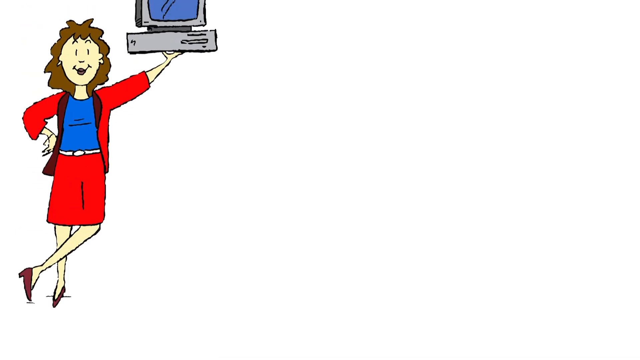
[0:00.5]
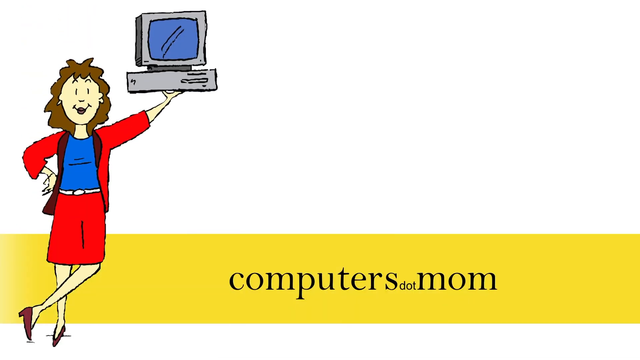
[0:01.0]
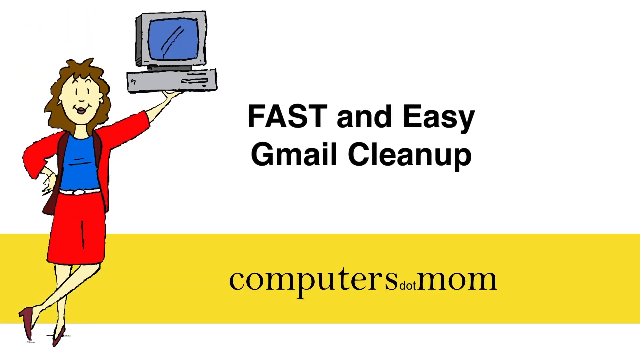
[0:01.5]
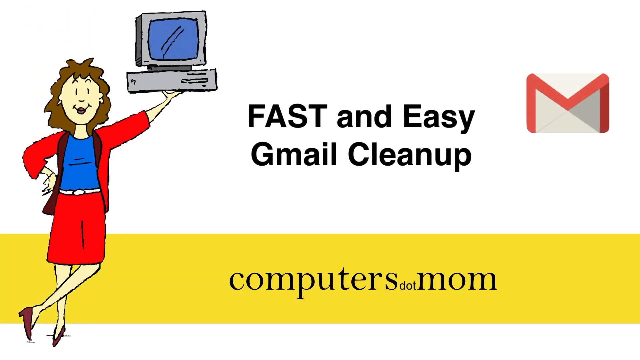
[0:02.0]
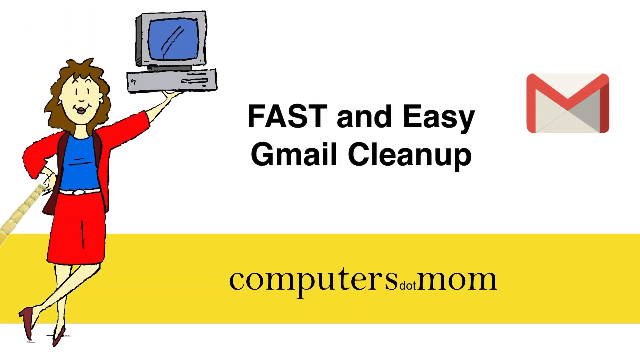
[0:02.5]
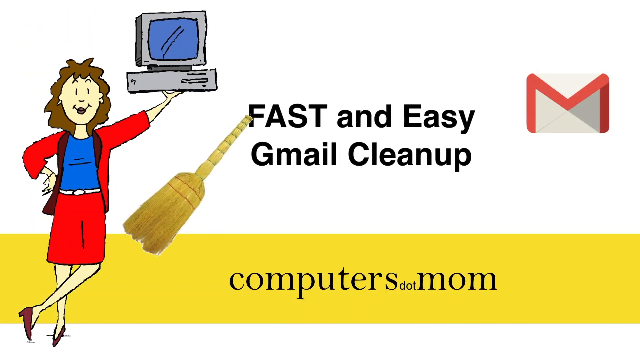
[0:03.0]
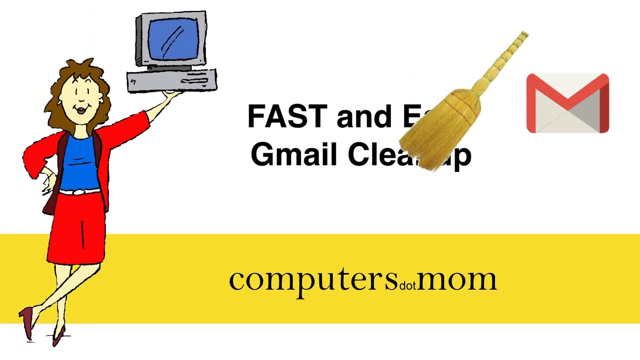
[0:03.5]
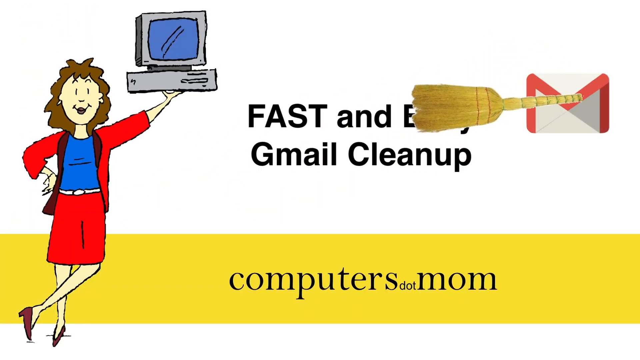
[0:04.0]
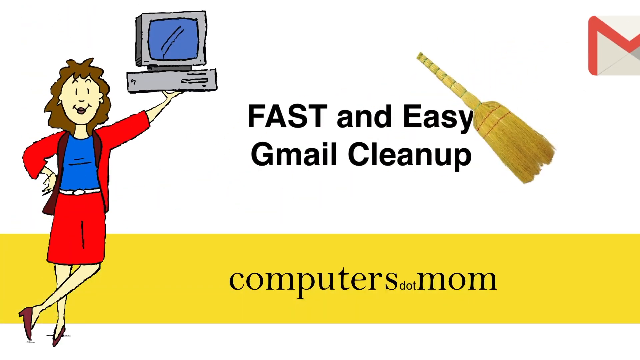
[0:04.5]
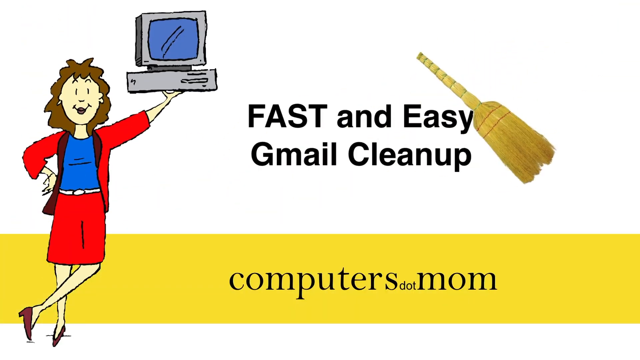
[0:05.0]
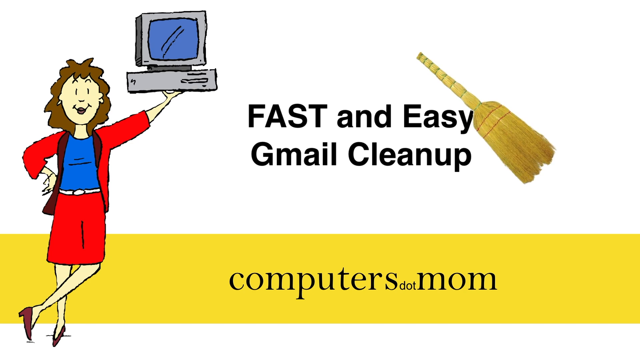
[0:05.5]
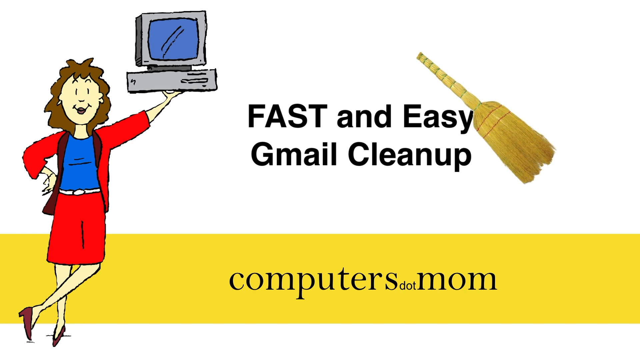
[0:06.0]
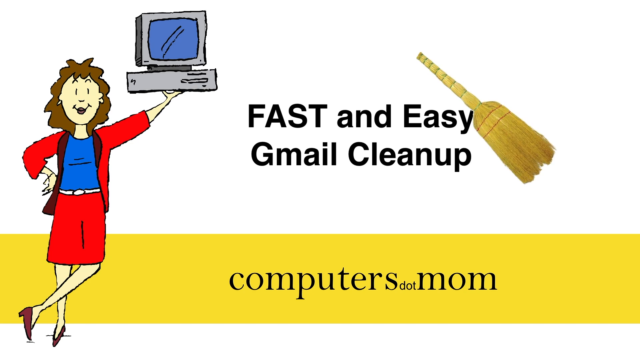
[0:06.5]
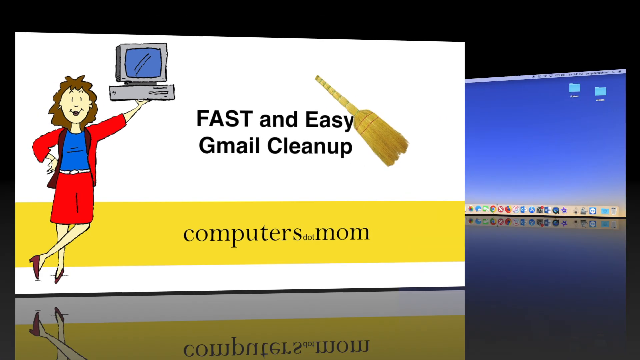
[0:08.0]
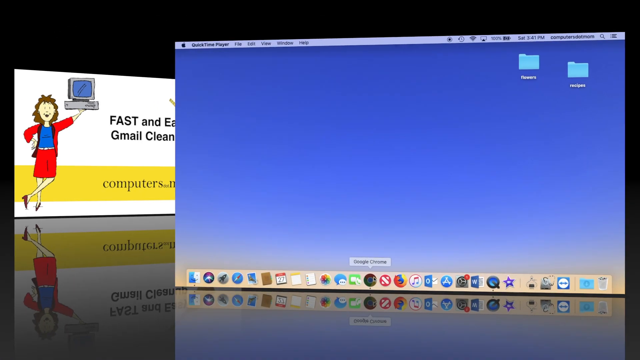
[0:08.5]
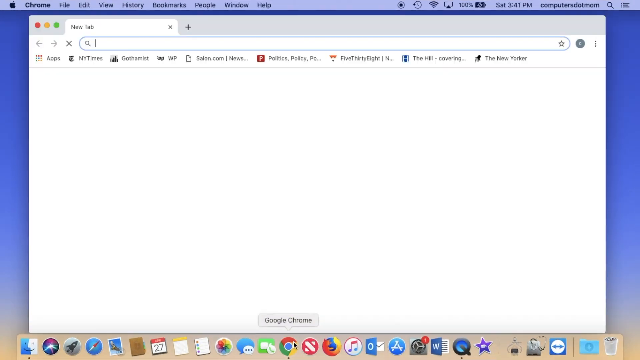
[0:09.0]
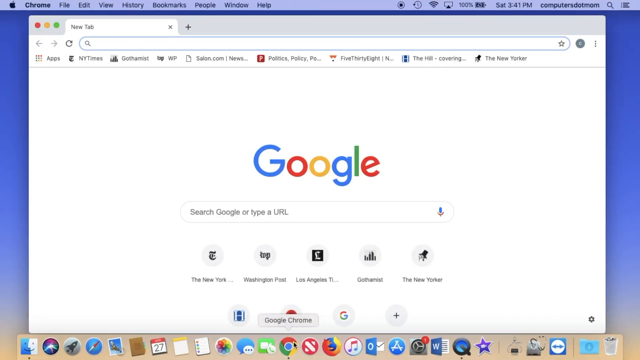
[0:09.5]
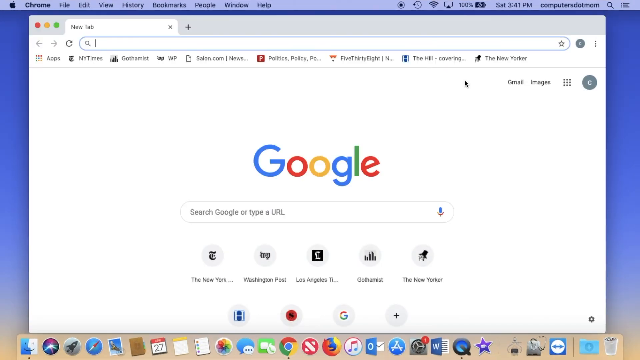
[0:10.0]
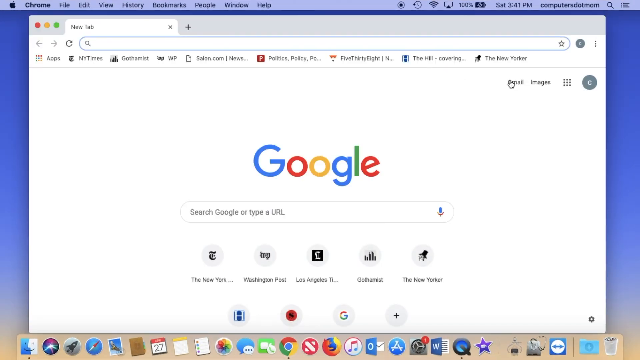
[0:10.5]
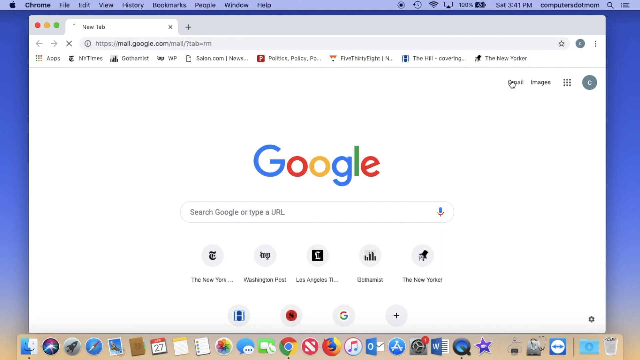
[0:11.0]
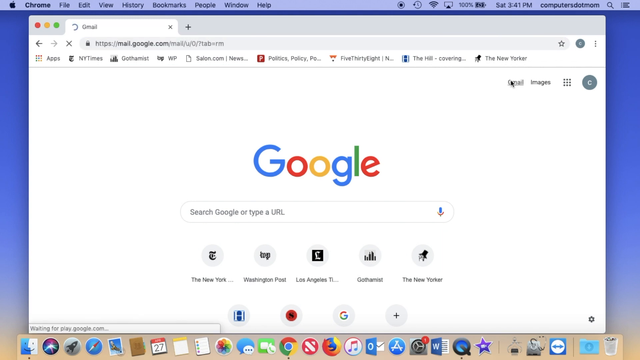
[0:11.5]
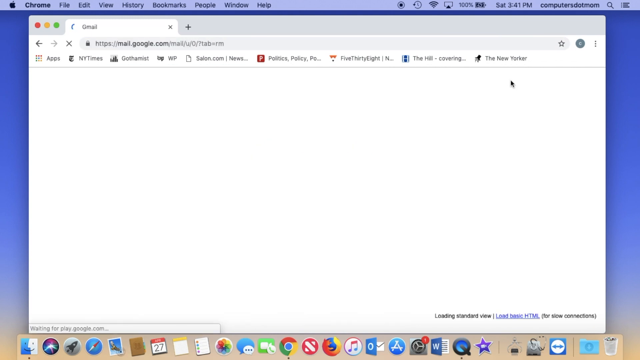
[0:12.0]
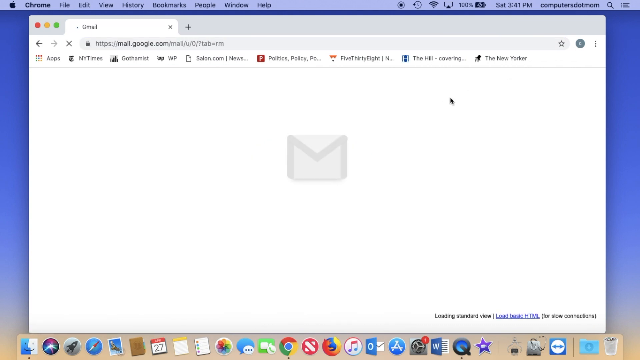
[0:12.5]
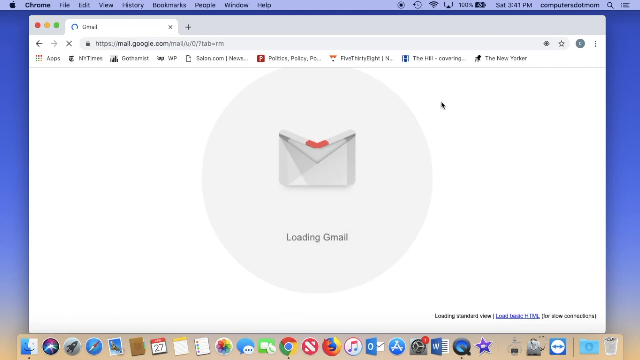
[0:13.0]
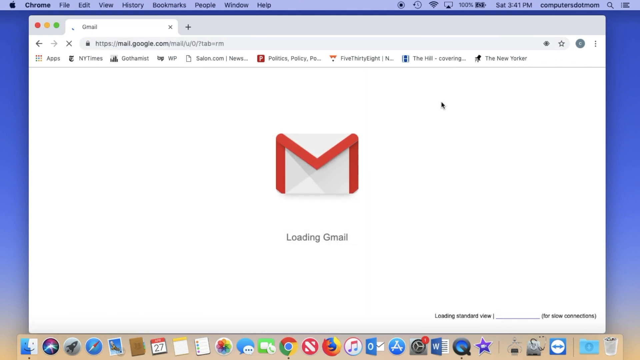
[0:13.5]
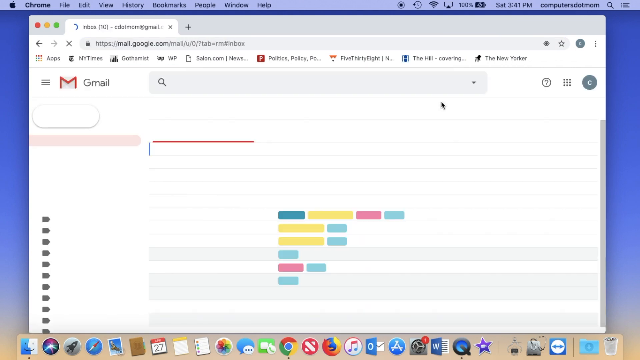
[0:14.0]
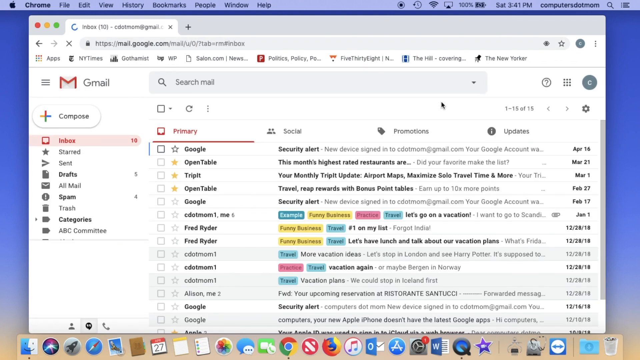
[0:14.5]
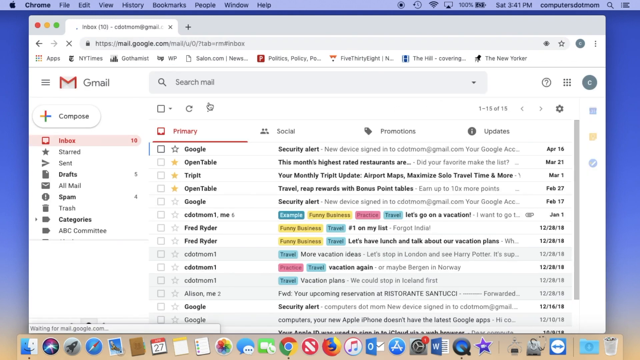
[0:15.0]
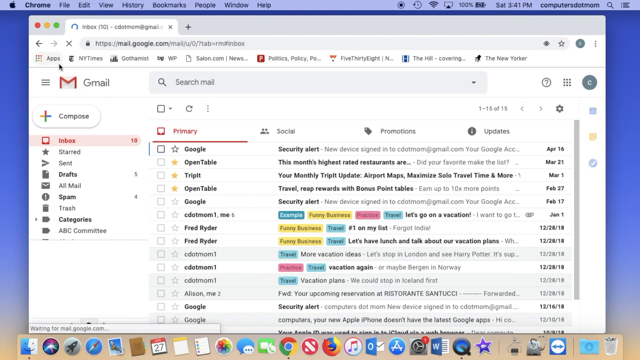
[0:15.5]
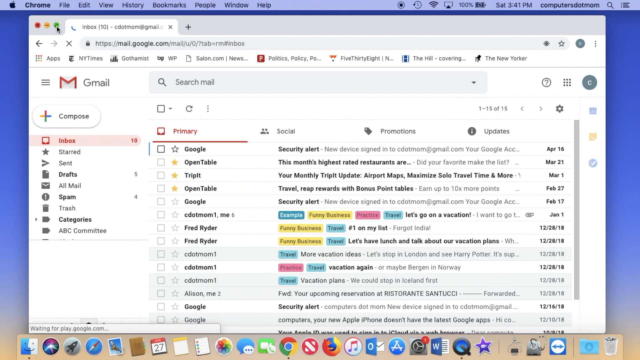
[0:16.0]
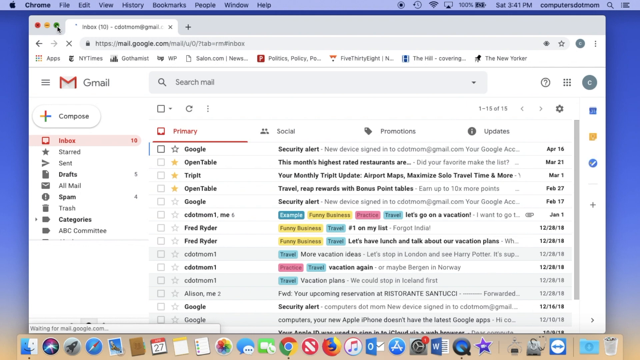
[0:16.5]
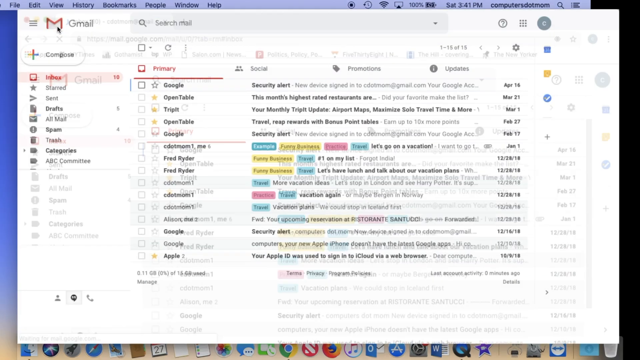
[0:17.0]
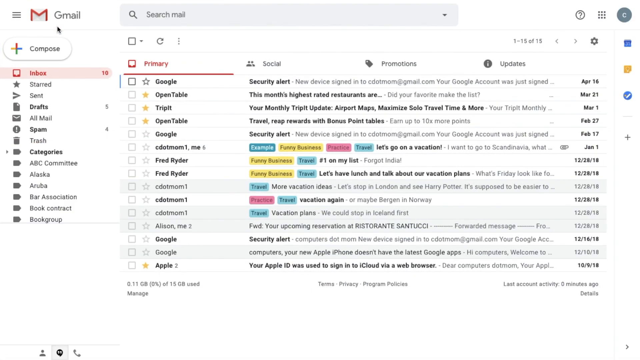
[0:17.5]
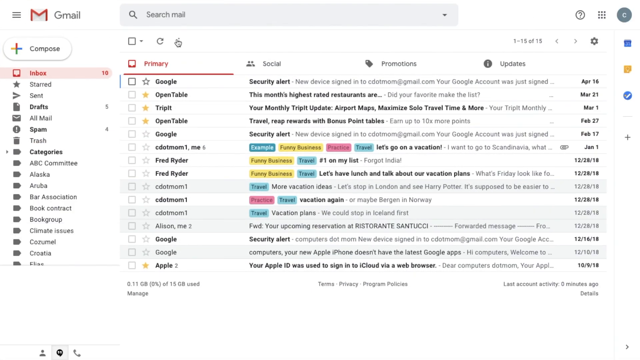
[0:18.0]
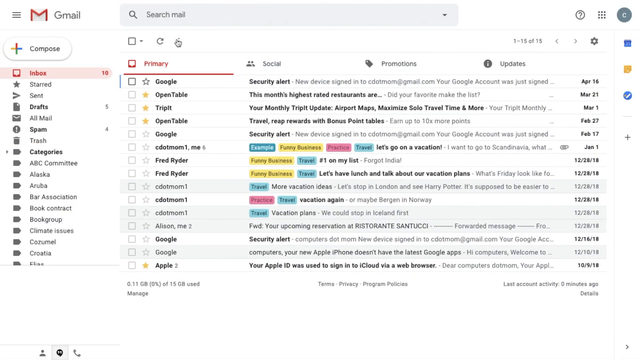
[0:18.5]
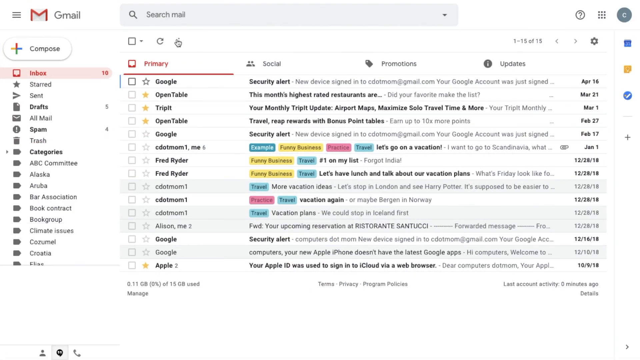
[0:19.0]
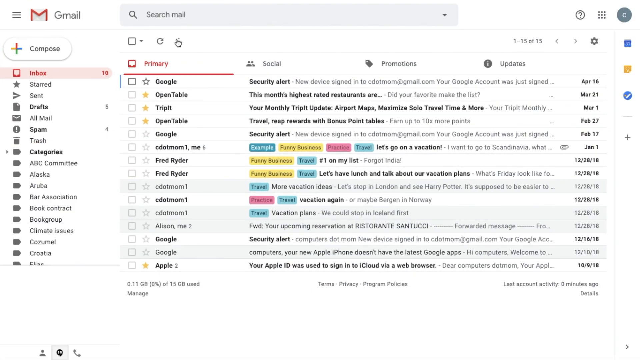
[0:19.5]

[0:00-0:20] A title reading "fast easy gmail clean up" appears with a Gmail logo and "Computers.mom", along with a mom who is holding a computer with her left hand. The screen then shows a Microsoft operating system, with Google Chrome selected and a new tab open. The page is blank at first, and then Gmail is selected and loads. Gmail shows the inbox messages, including a Google Security Alert, an Open Table message reading "This month's highest rated restaurants are", and a TripIt message reading "monthly TripIt update". The Gmail interface displays a lot of information.